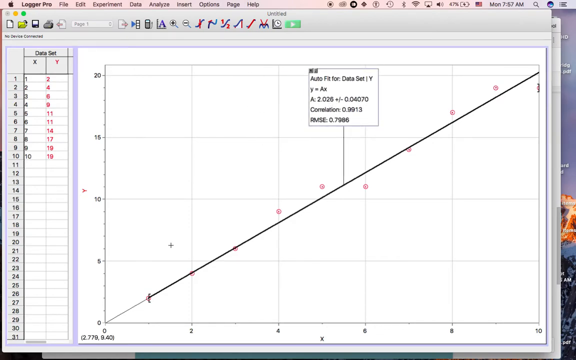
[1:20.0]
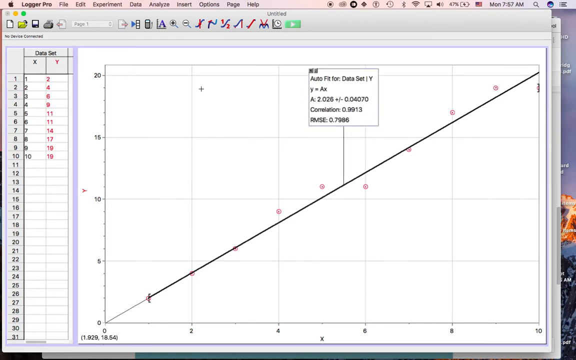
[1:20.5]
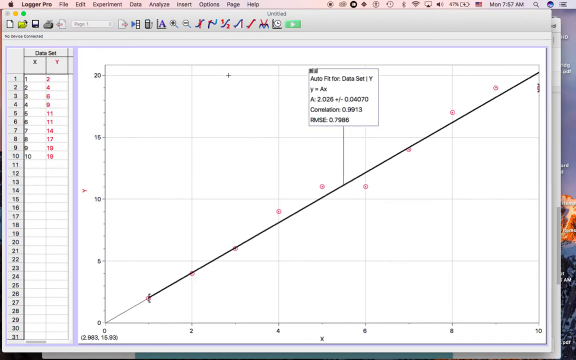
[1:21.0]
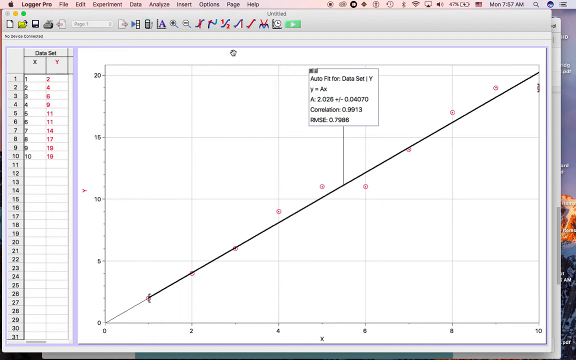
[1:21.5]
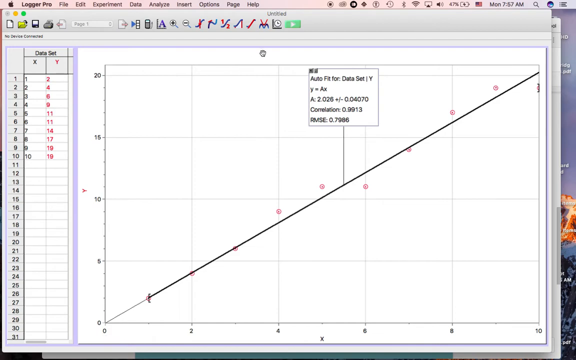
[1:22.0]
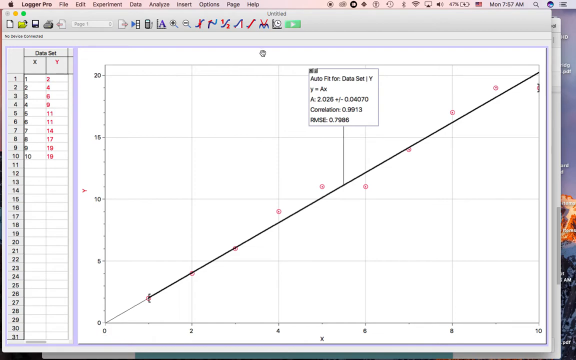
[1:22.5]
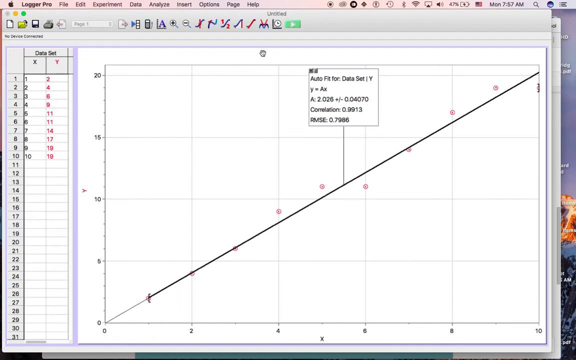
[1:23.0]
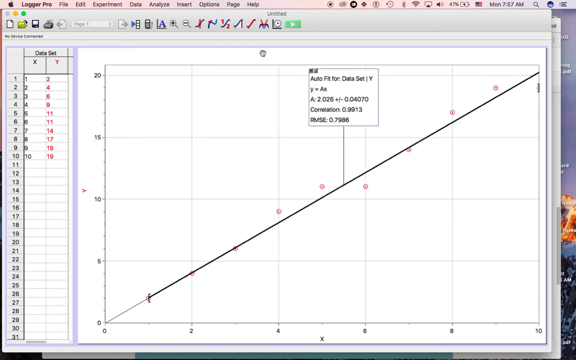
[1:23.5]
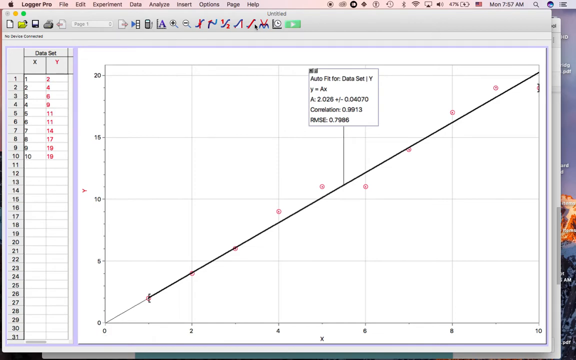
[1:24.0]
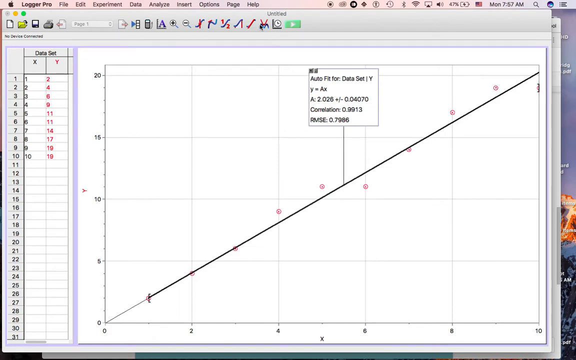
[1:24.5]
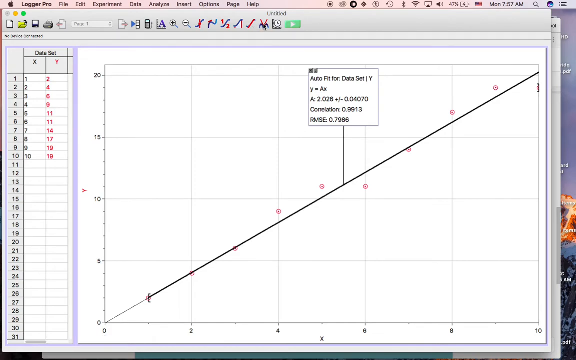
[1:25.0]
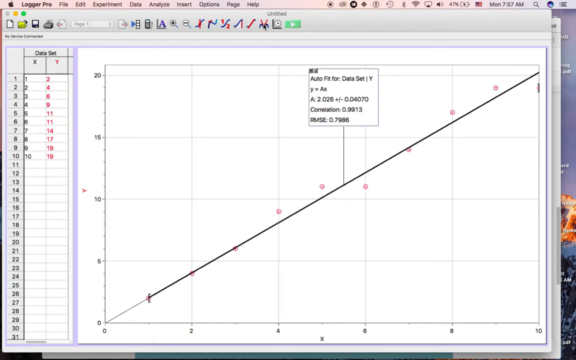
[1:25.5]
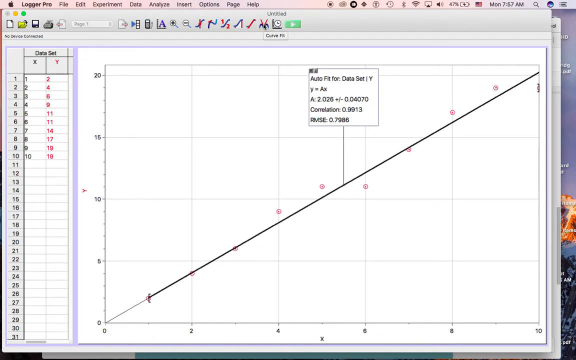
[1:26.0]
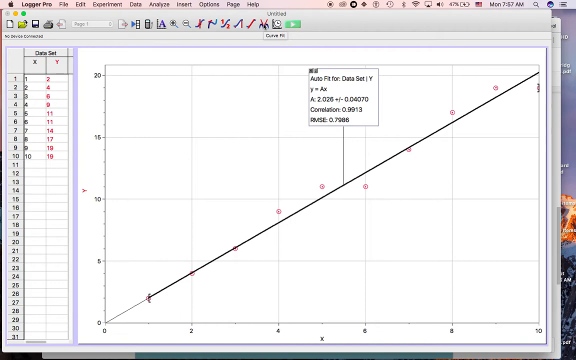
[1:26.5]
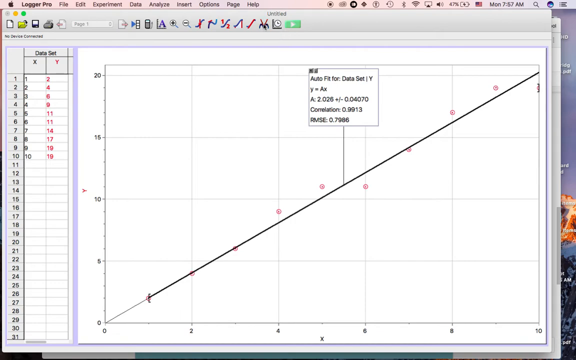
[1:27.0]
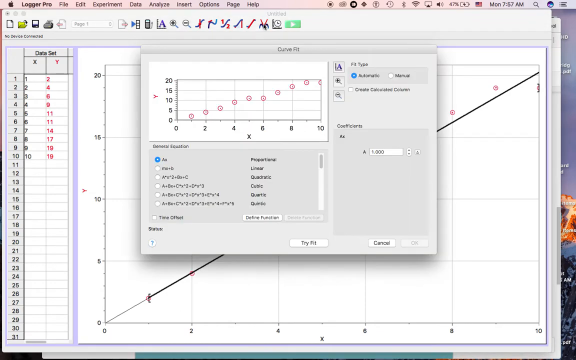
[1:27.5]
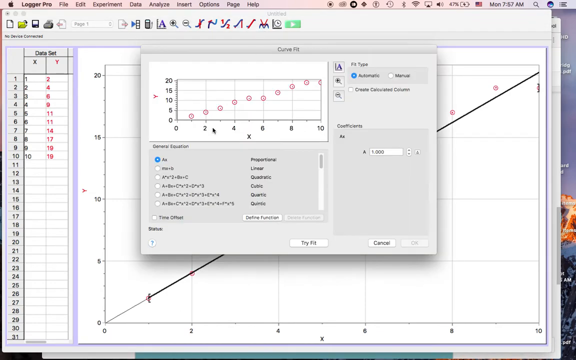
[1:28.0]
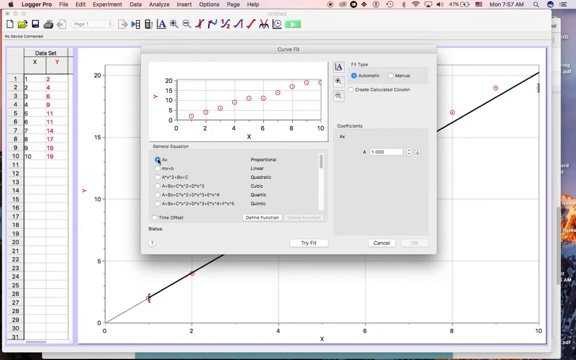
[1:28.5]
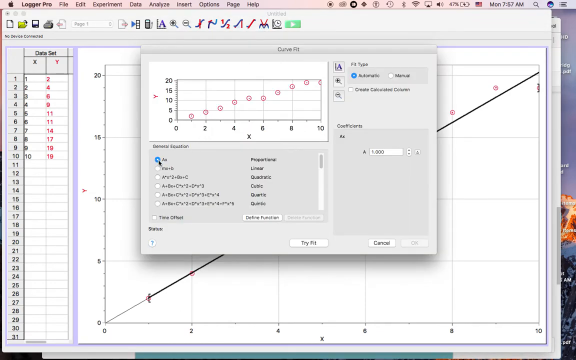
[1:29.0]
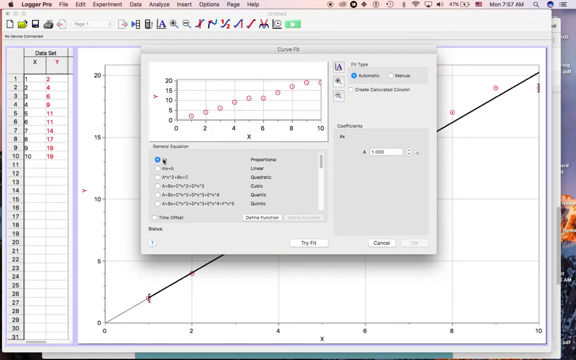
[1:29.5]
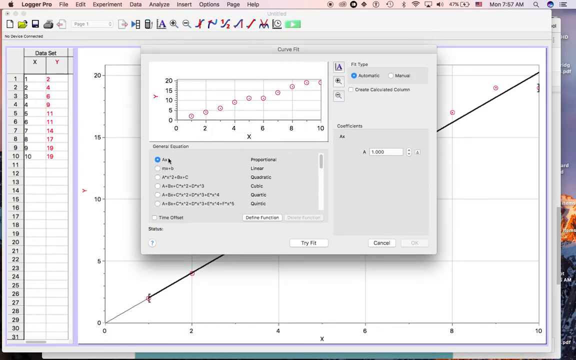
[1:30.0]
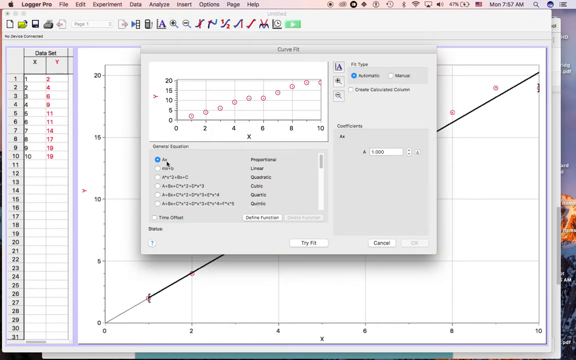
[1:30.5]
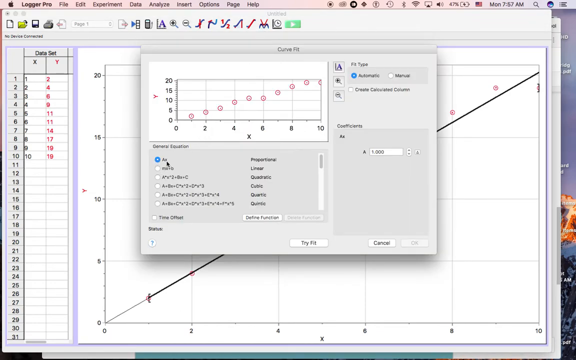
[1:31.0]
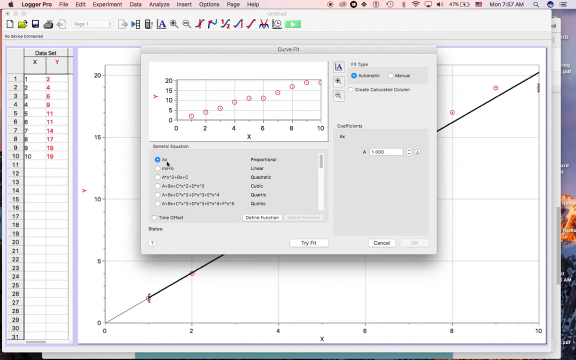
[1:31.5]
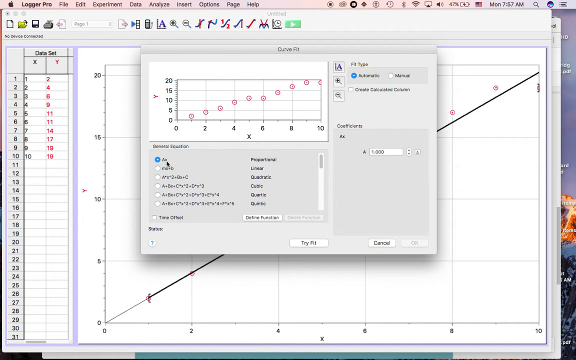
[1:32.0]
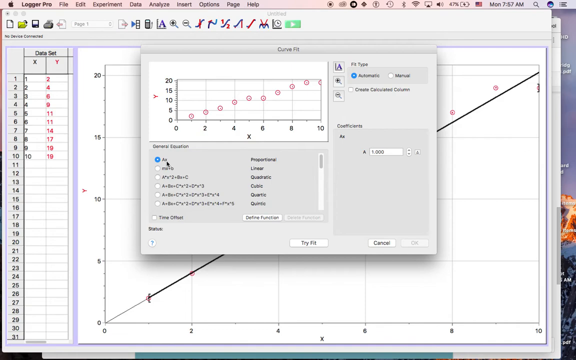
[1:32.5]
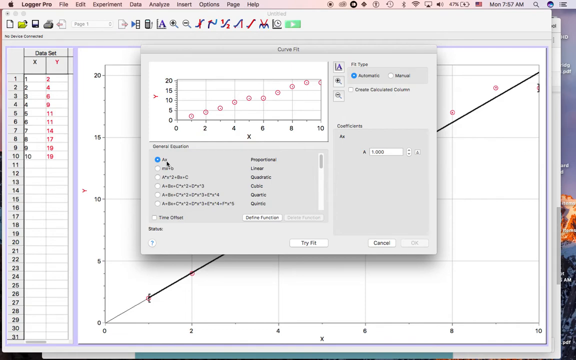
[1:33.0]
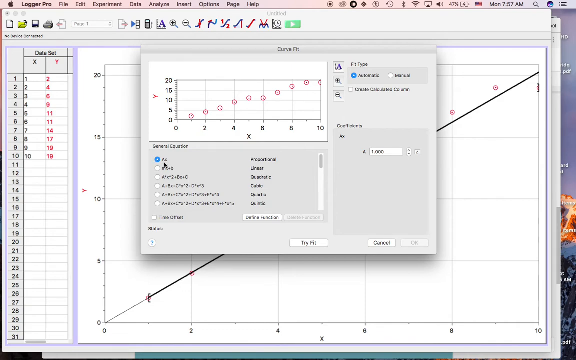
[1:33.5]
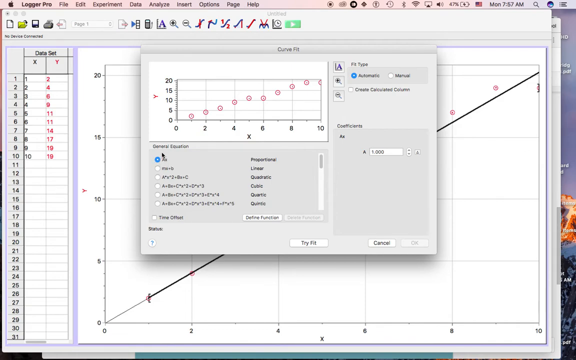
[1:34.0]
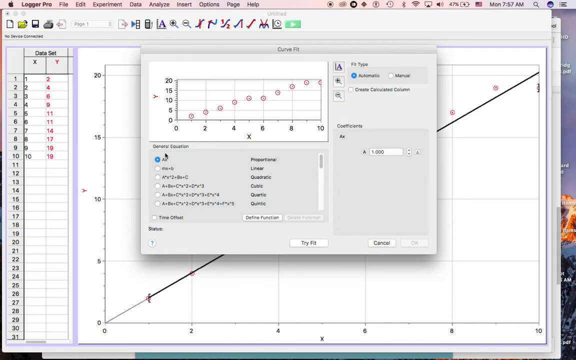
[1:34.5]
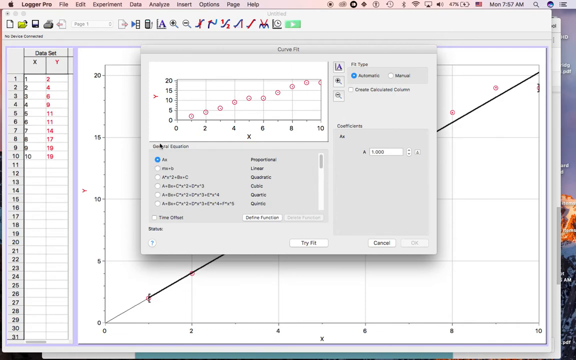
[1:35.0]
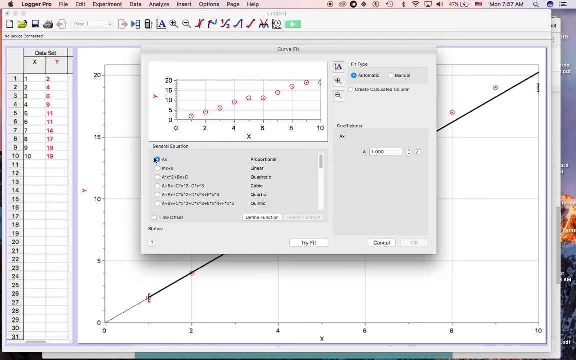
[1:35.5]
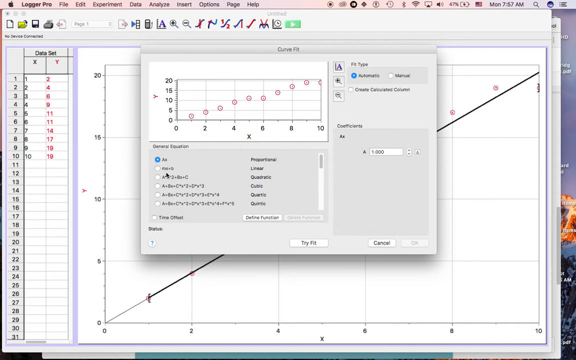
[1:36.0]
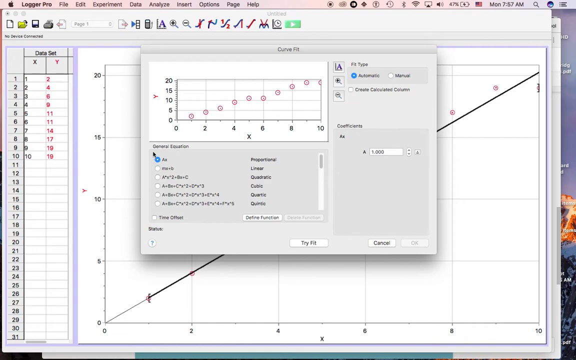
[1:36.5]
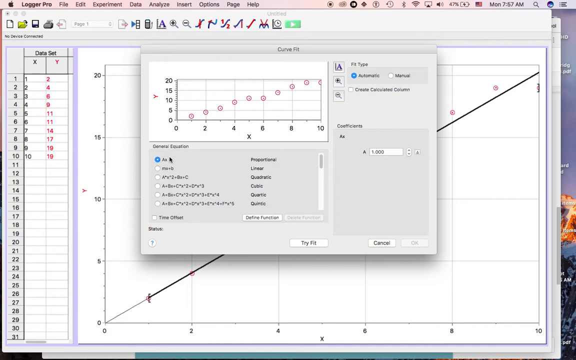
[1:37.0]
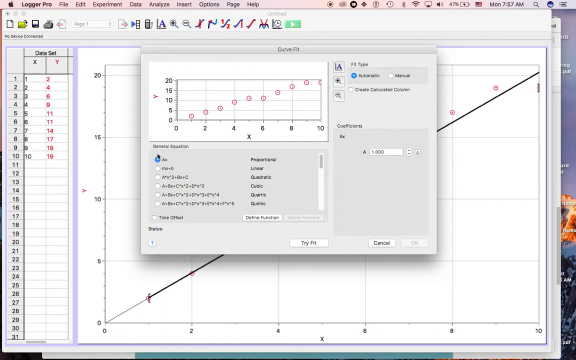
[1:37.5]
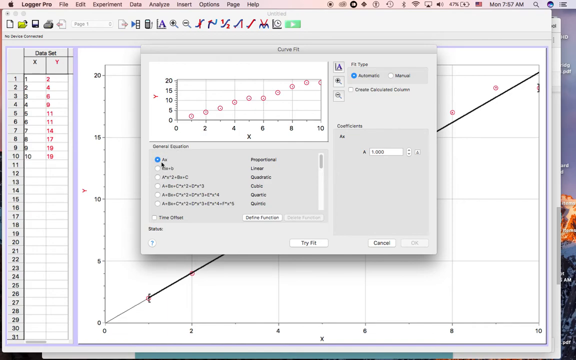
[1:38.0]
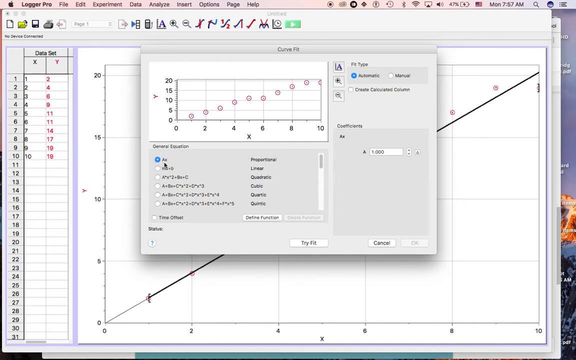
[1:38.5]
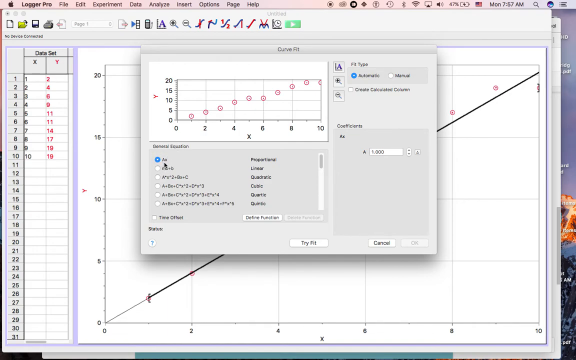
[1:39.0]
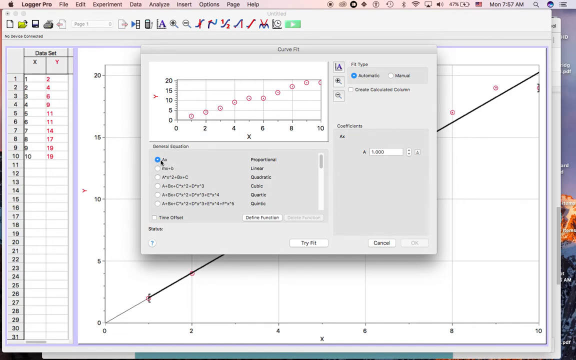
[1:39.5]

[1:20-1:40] The mouse pointer goes to the upper left area, moves onto the Curve Fit button, and selects it again. The small rectangular window opens again, titled "curve fit" at the top. It contains a small preview of the graph and some math equations, different formulas including a linear equation, a quadratic equation, and a cubic equation. The pointer goes to the first equation, at the top, and keeps circling around it and around the blue circle that is checked on it, indicating that it is selected. The first equation is very simple and appears to be just the letter A with the letter X next to it.